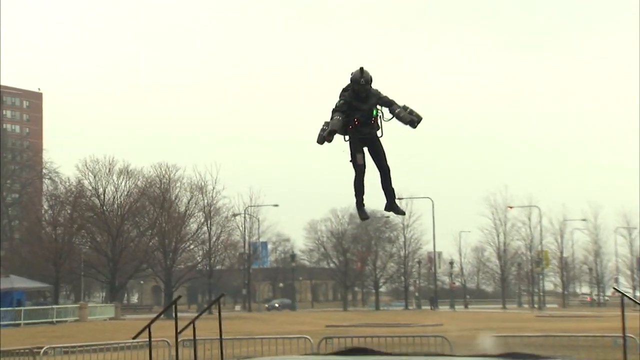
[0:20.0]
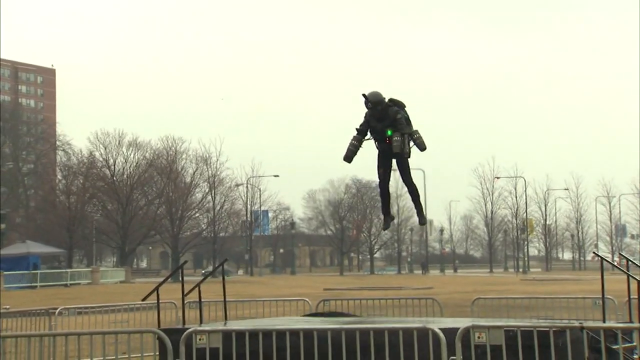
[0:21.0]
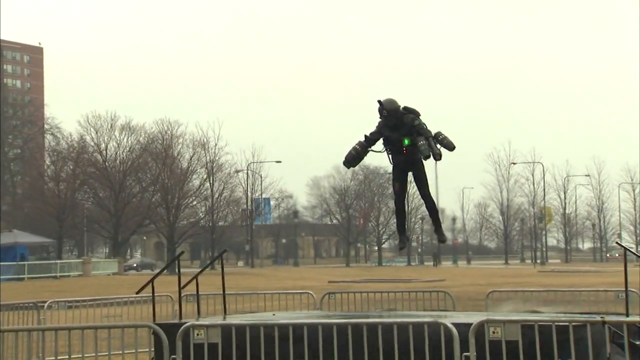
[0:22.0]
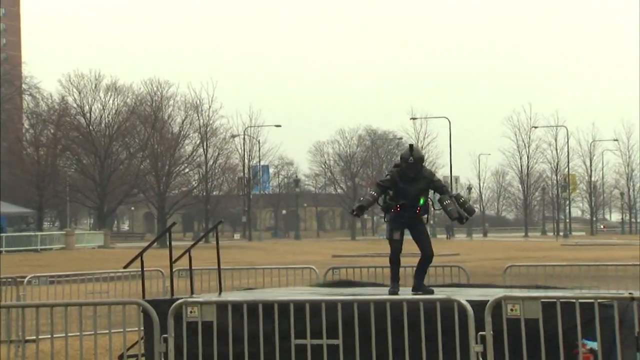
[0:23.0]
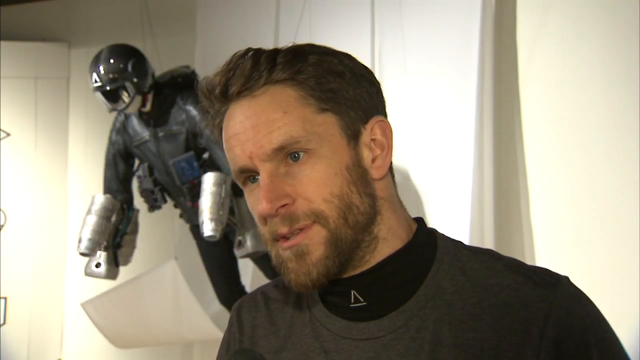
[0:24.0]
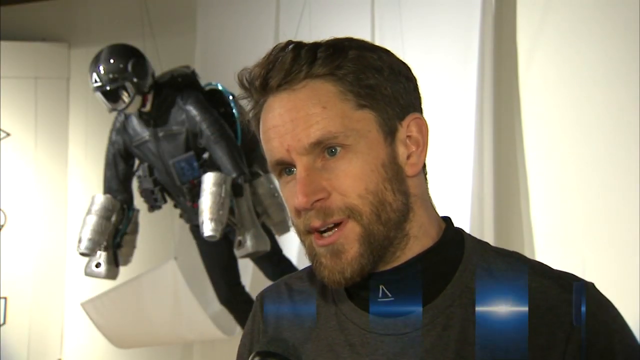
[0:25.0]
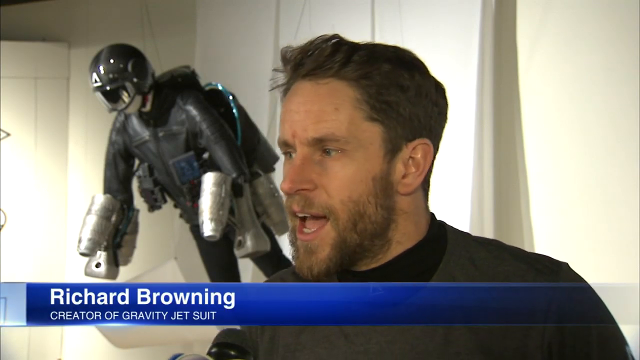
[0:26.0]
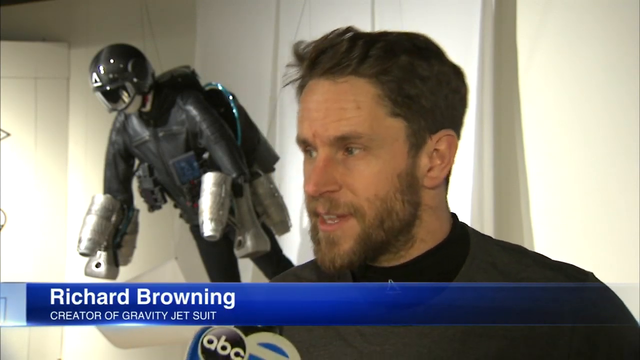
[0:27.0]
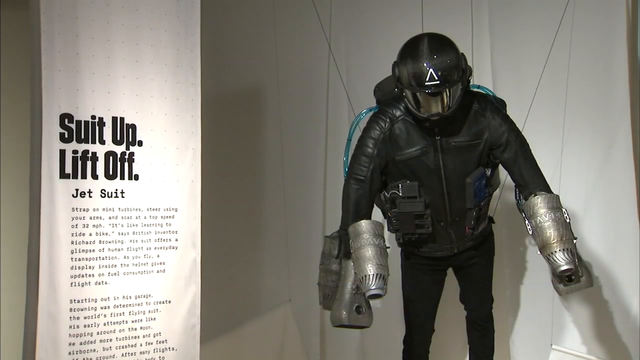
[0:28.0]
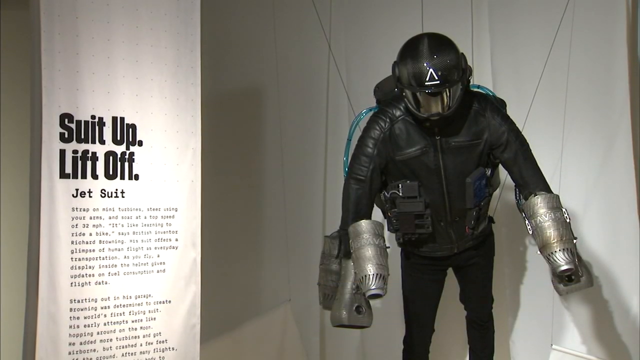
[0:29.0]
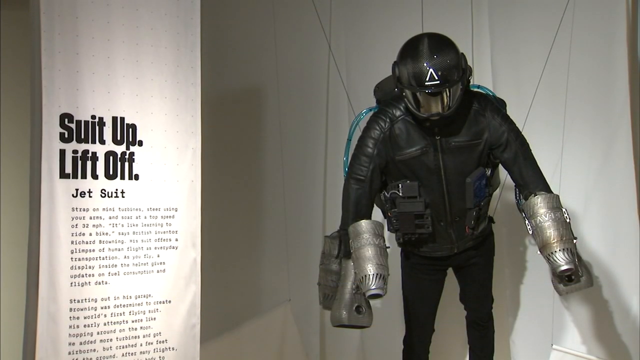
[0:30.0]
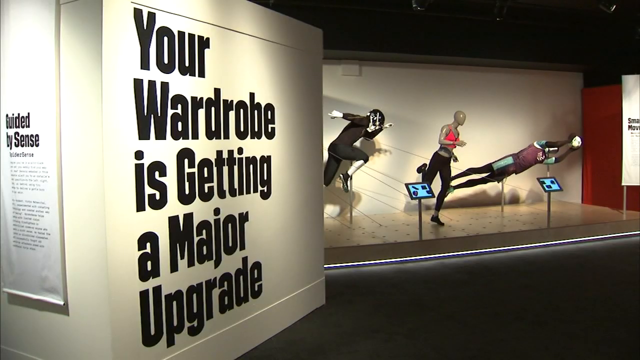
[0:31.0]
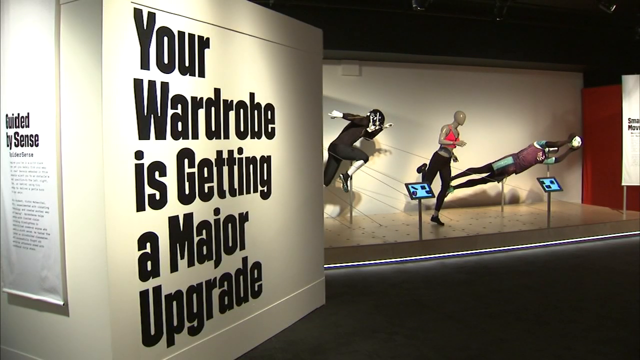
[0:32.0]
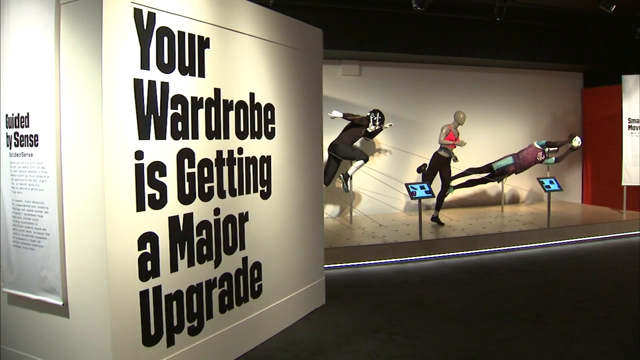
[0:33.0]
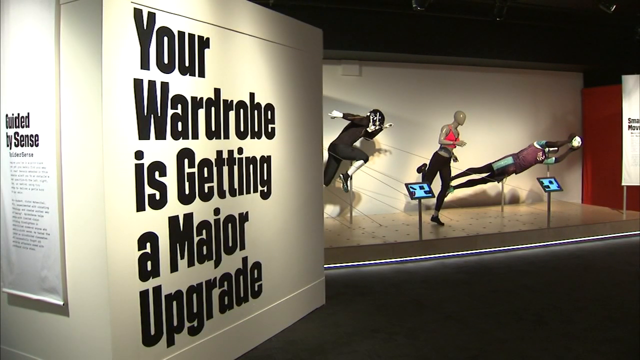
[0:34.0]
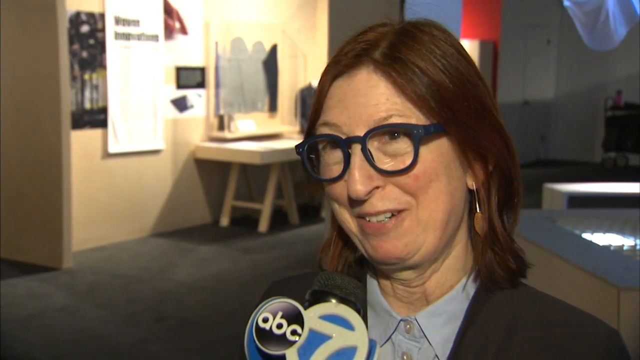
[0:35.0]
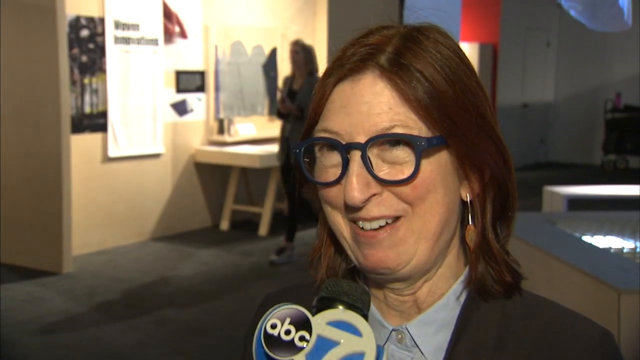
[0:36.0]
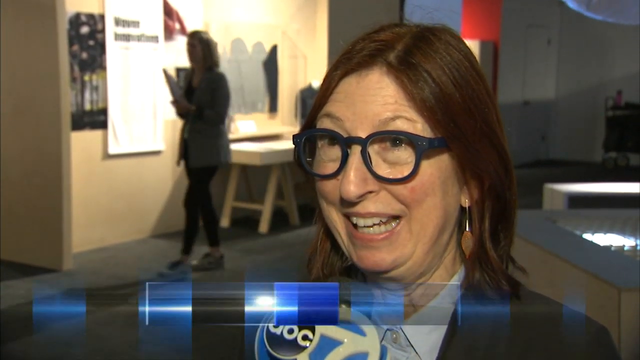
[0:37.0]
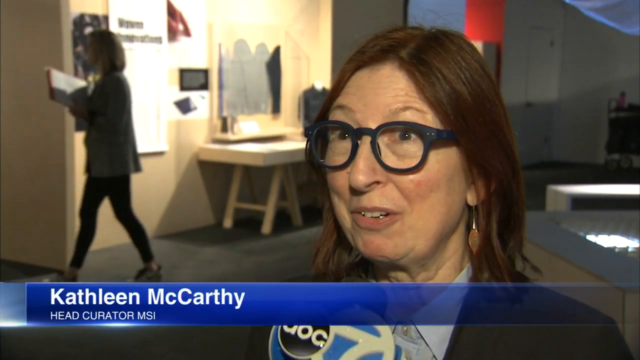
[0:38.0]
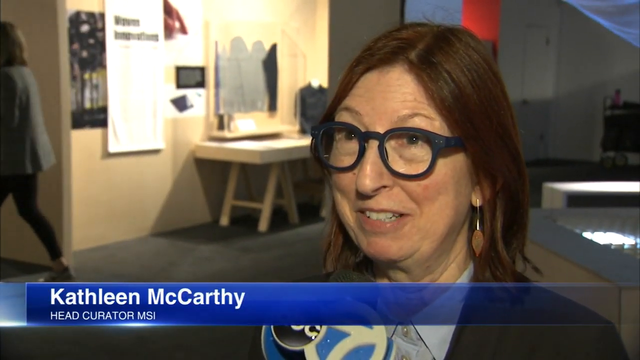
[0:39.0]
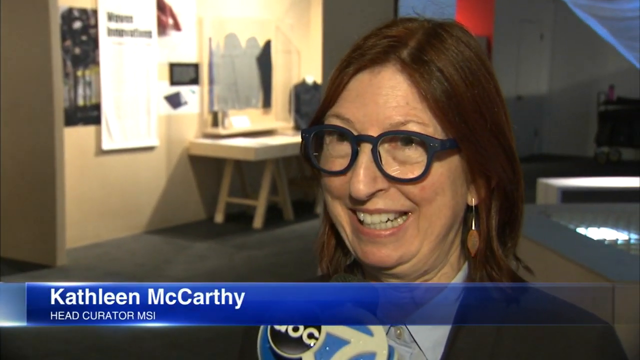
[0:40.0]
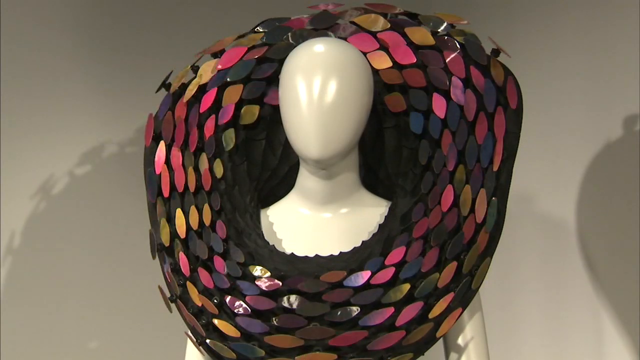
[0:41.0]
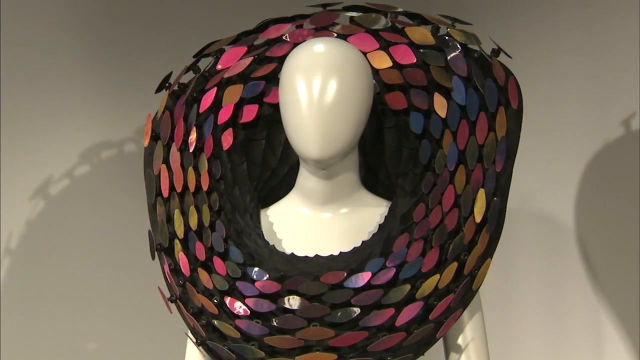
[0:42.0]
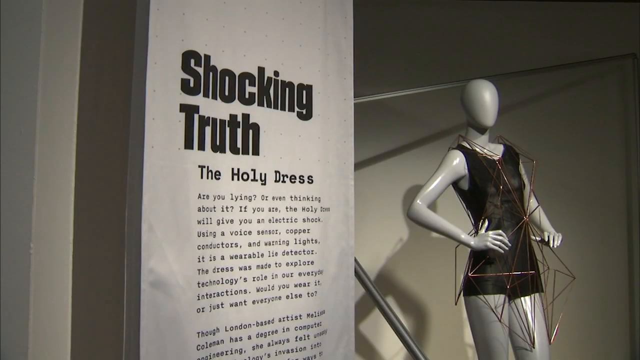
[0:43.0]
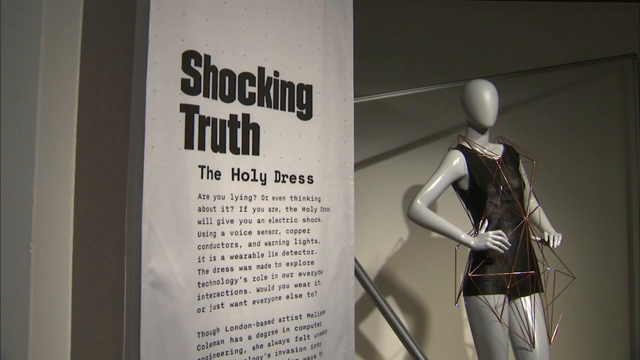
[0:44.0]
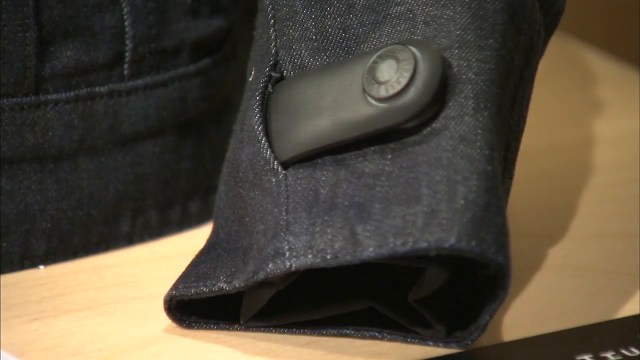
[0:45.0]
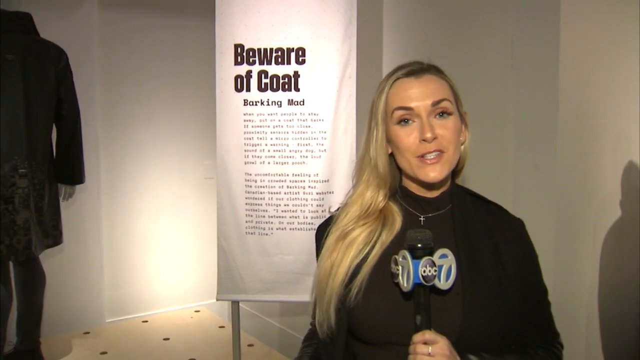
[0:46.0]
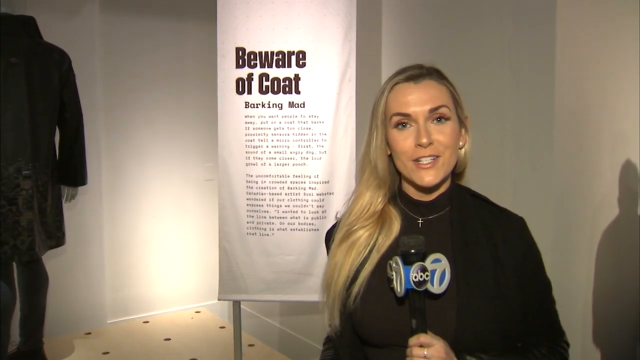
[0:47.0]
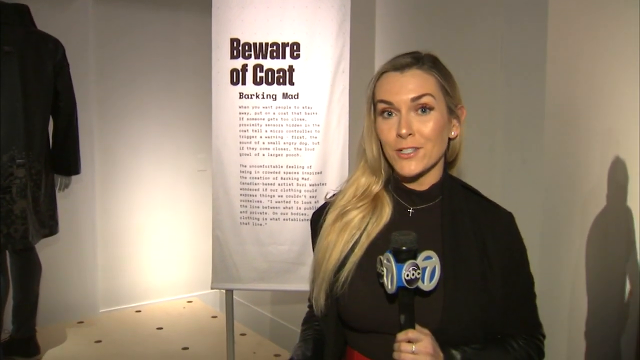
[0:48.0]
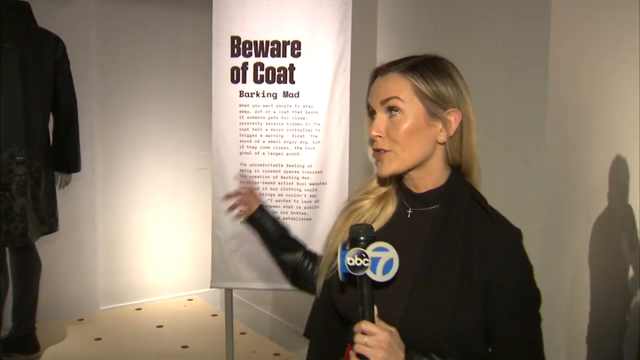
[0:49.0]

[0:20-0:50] The man continues floating outside in his black outfit, with thrusters on his hands that apparently propel him up, and he comes to a landing. A man is then interviewed, labeled on the bottom of the screen as the creator of the suit, which is shown in the background. A view of the suit follows, along with more views of the expo and exhibits in the building. A woman named Kathleen McCarthy is interviewed, then more exhibits of fancy outfits on display appear. Lastly, a female reporter with ABC7 on her microphone talks toward the camera, presenting a specific exhibit with a title in the background beginning "Beware of Coat."